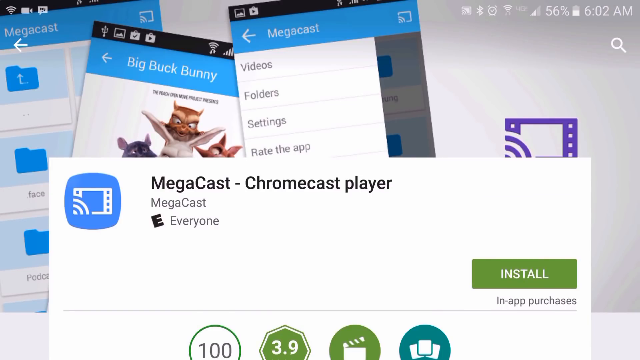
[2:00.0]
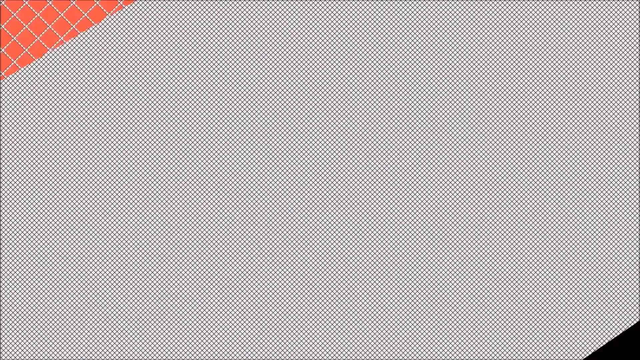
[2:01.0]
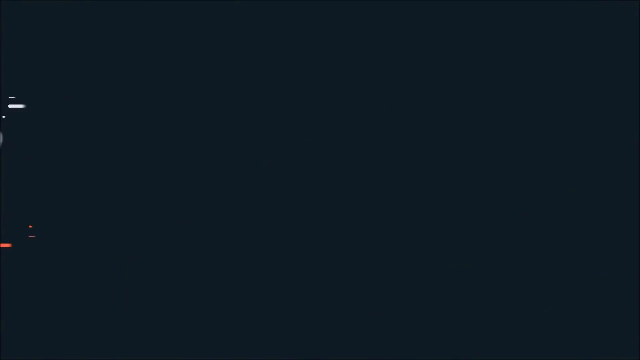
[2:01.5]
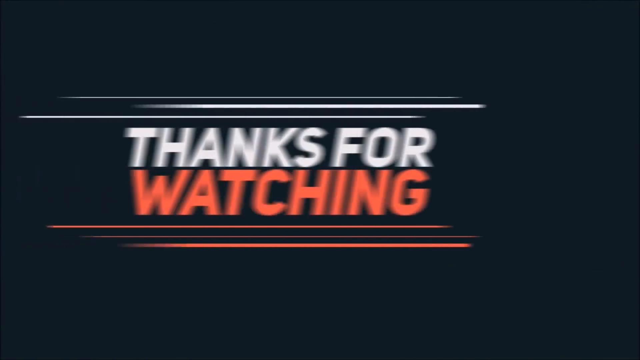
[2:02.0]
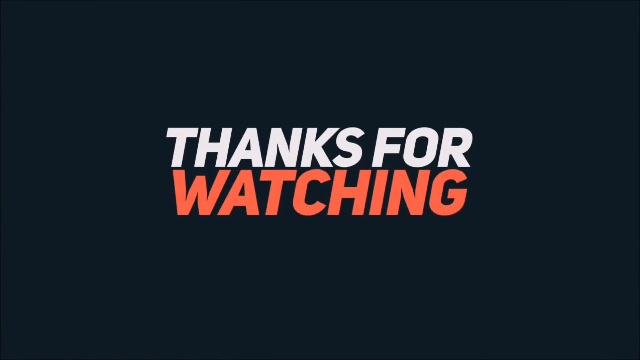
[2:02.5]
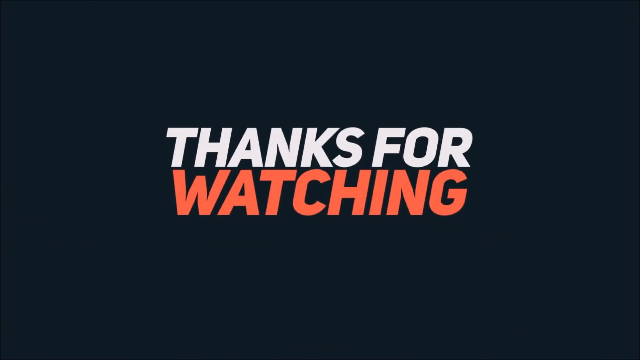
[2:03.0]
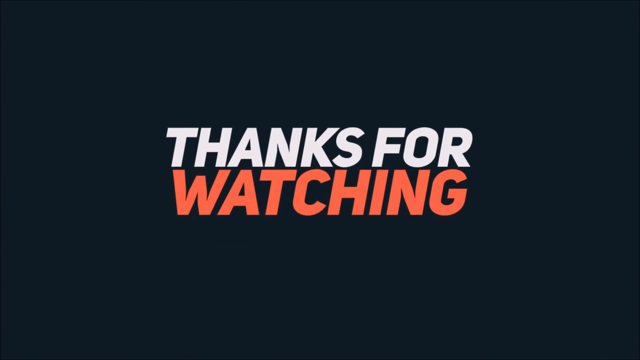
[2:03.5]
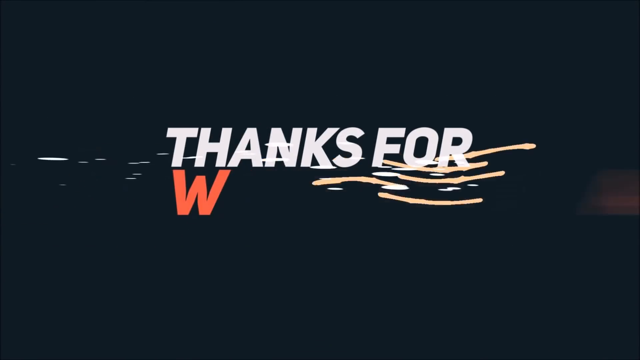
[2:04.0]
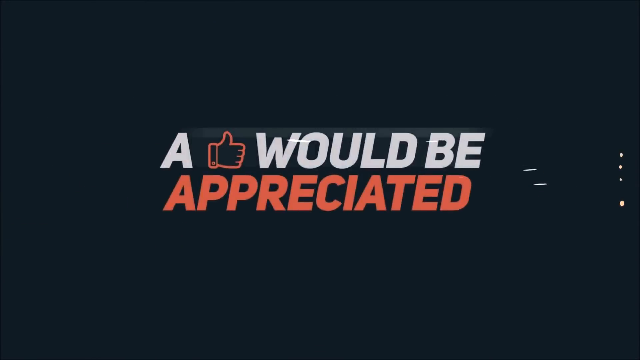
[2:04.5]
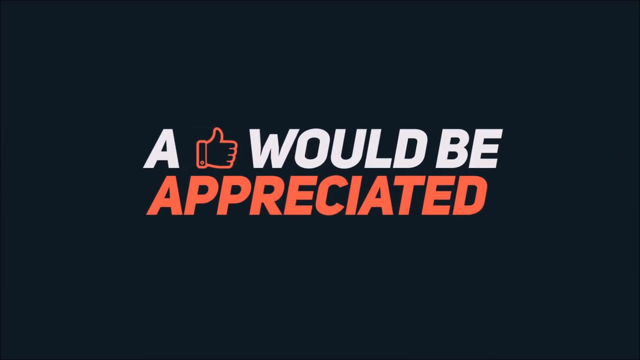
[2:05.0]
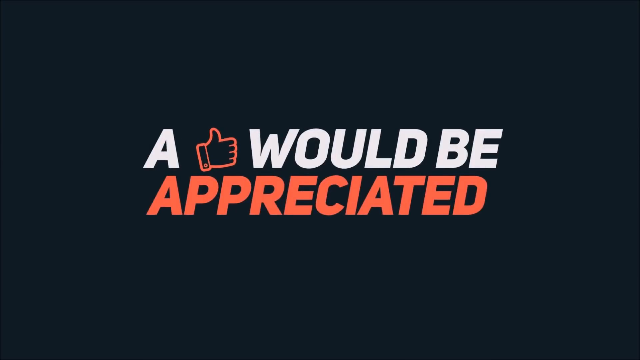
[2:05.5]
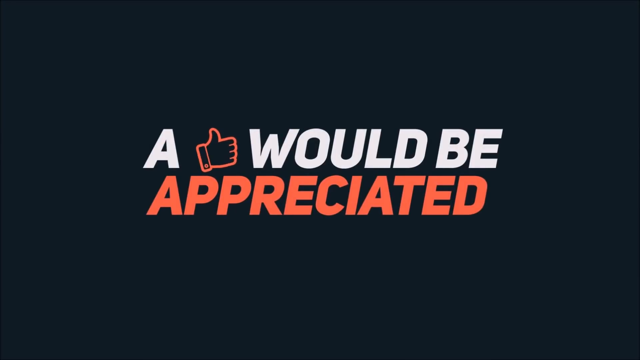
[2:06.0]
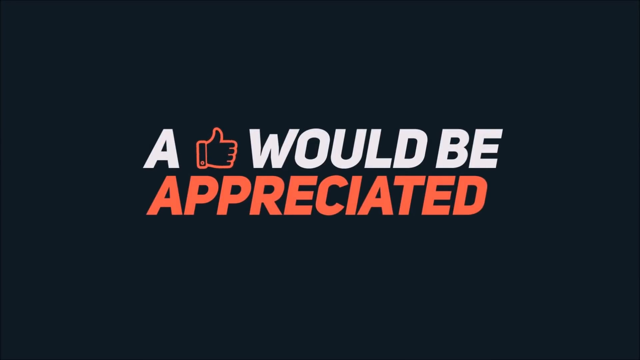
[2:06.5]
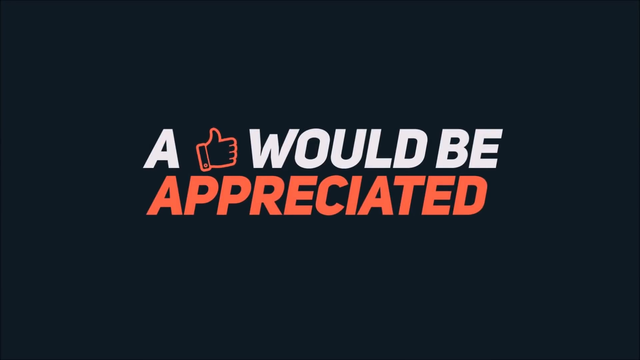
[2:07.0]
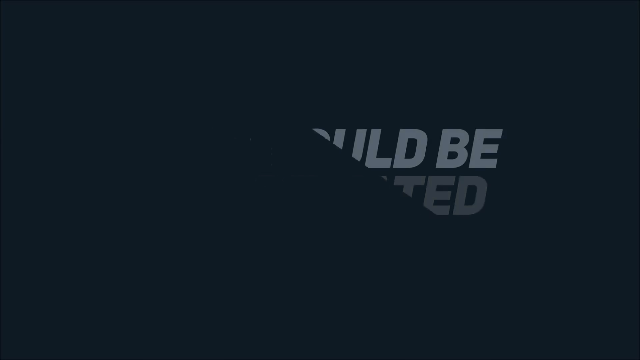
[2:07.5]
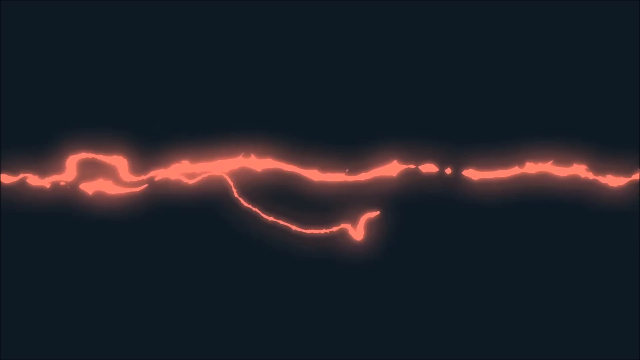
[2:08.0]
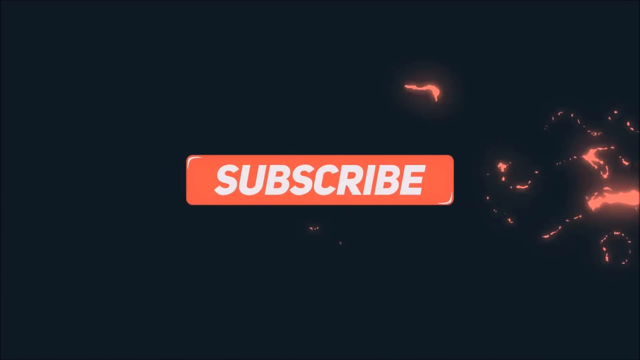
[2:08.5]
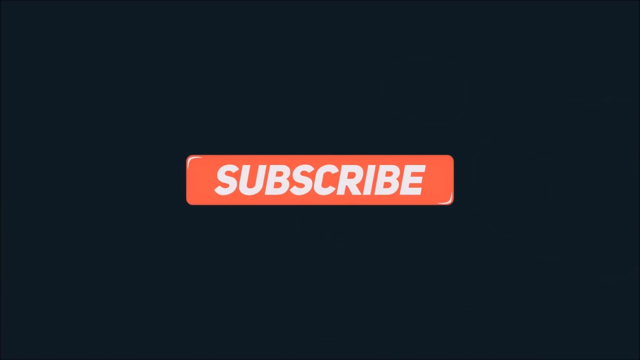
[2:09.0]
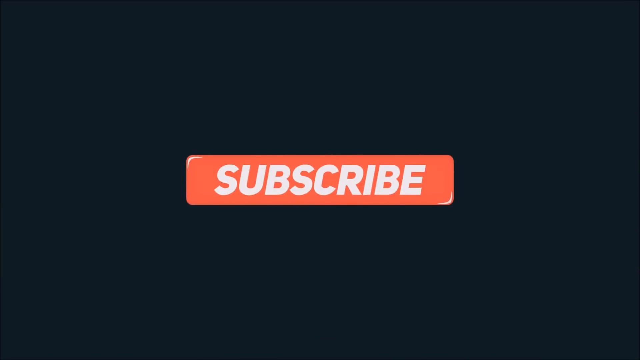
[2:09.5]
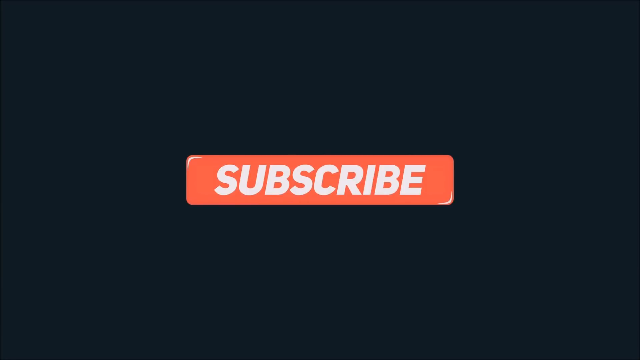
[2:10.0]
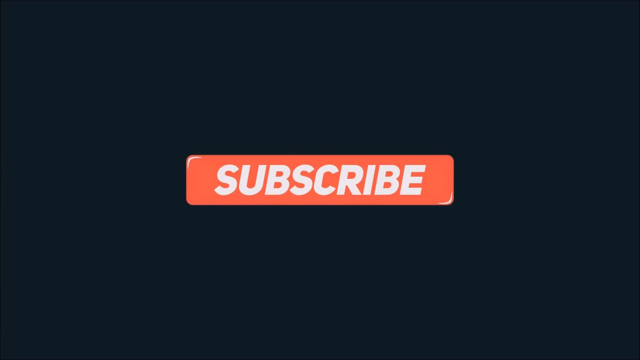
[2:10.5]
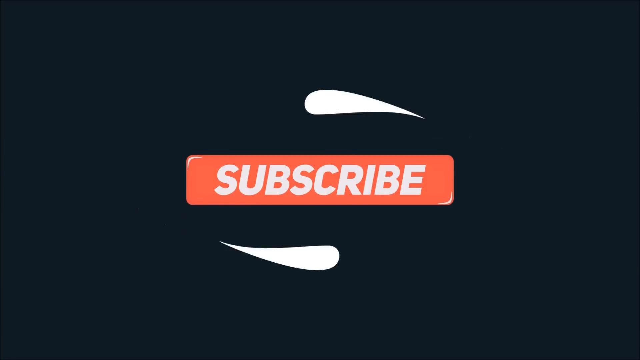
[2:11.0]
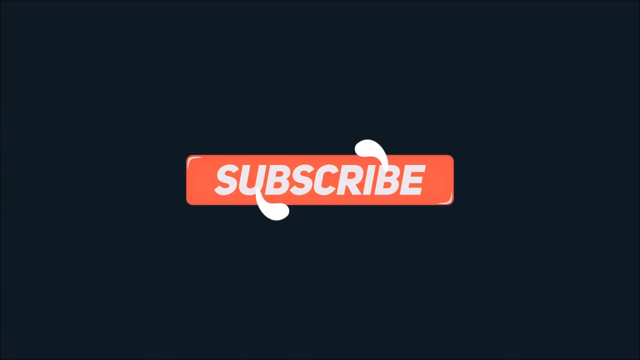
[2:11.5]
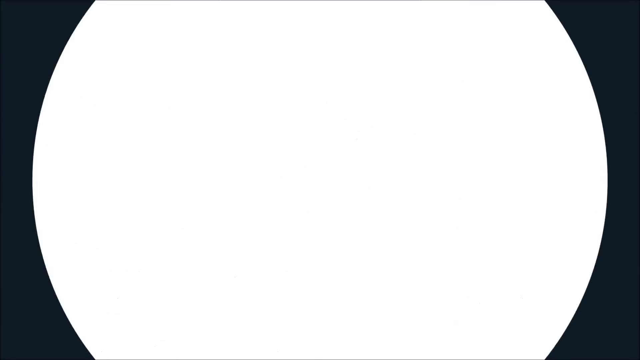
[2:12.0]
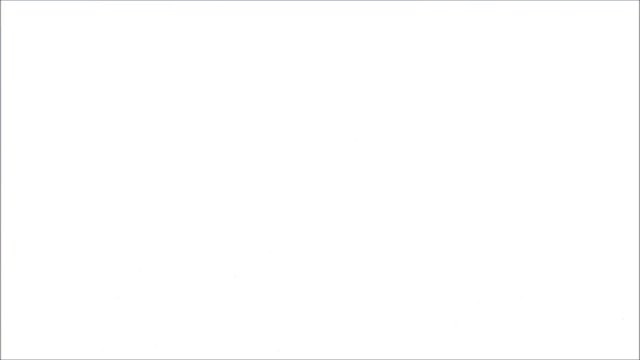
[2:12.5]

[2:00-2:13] The Megacast Chromecast Player install button is shown in the Google Play Store, along with a background image showing Big Buck Bunny, which is some game available in the store, and "Megacast Video Folder". A red pattern of orange and white then scrolls quickly across the screen, followed by another orange and white, with "thank you for" in white and "watching" in orange. The screen changes again to "a thumbs up would be appreciated": "a" is white, the thumbs-up icon is orange, "would be" is white, and "appreciated" is orange.